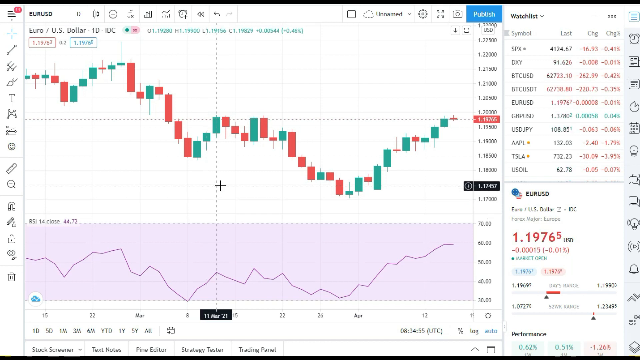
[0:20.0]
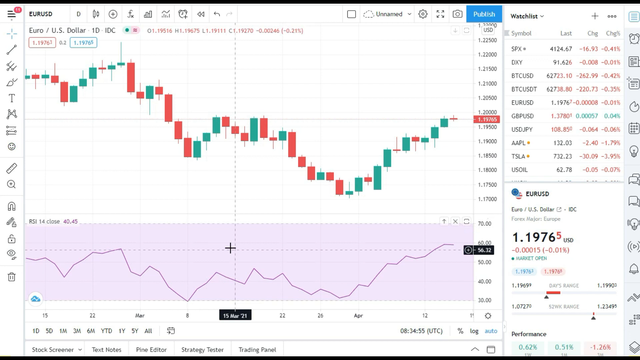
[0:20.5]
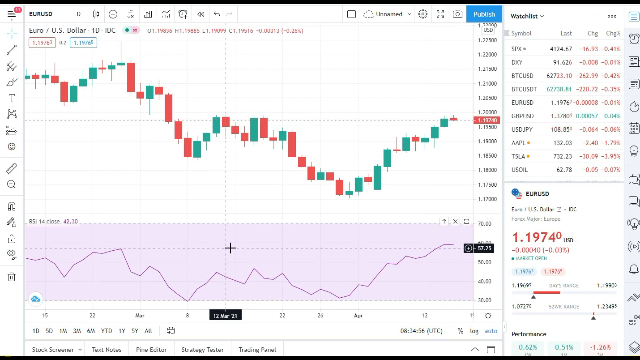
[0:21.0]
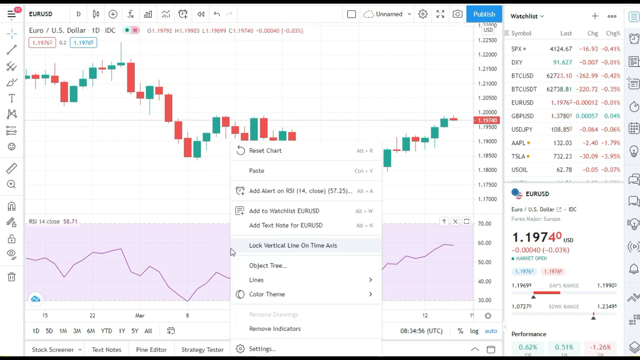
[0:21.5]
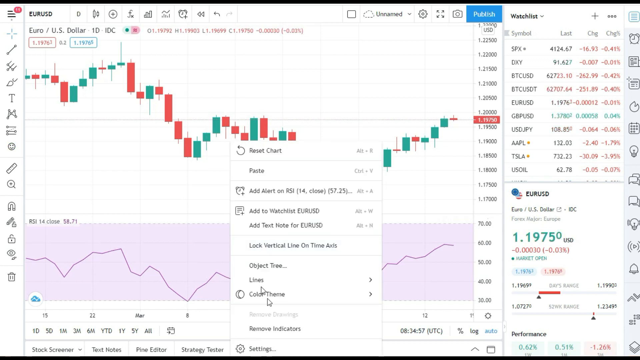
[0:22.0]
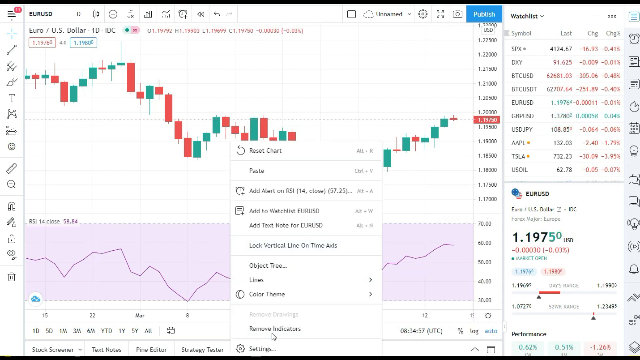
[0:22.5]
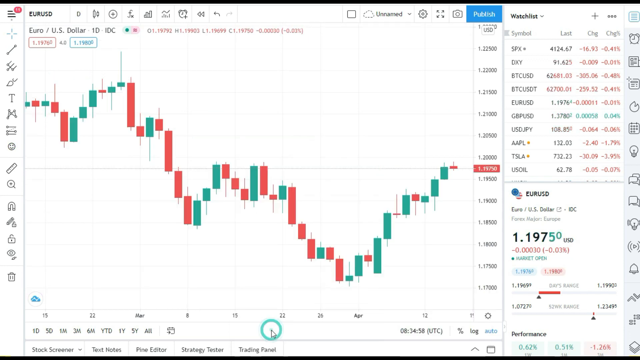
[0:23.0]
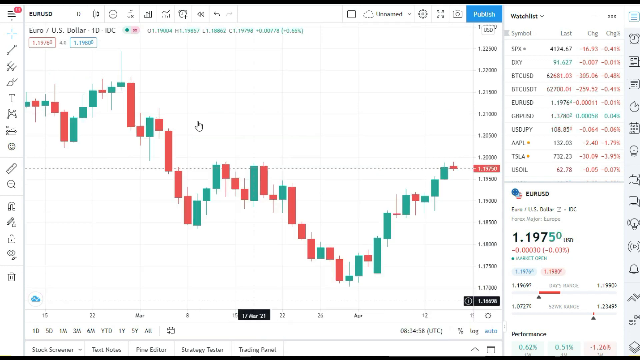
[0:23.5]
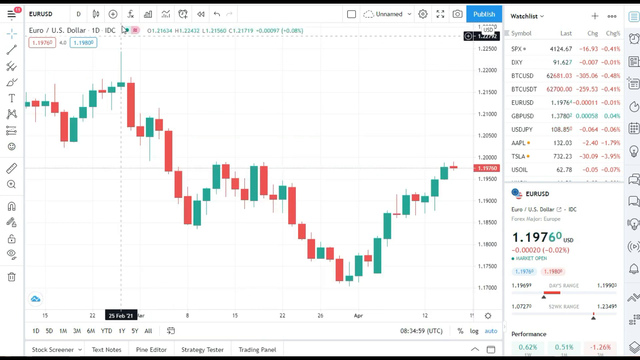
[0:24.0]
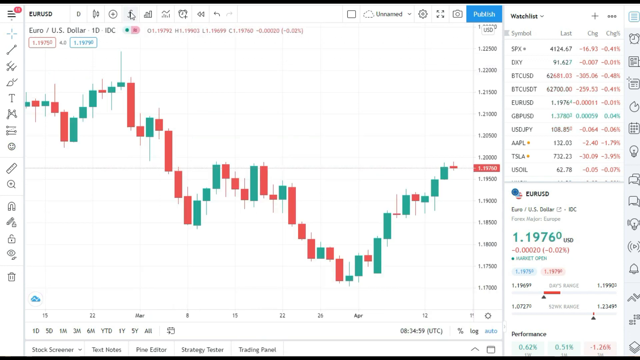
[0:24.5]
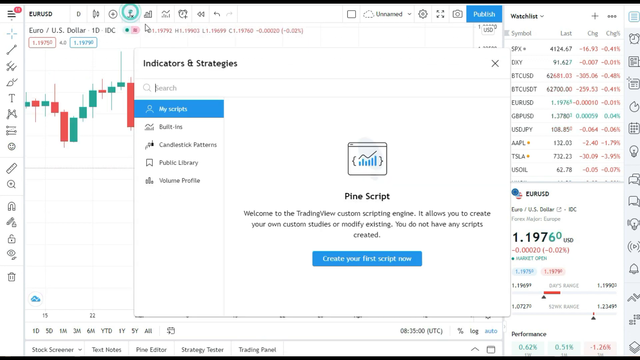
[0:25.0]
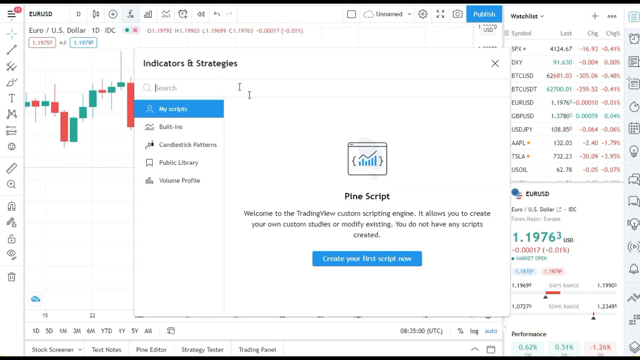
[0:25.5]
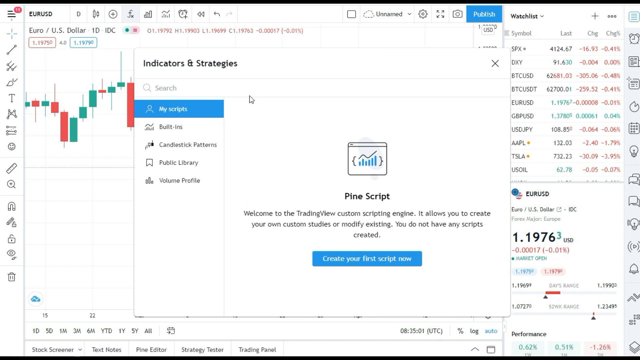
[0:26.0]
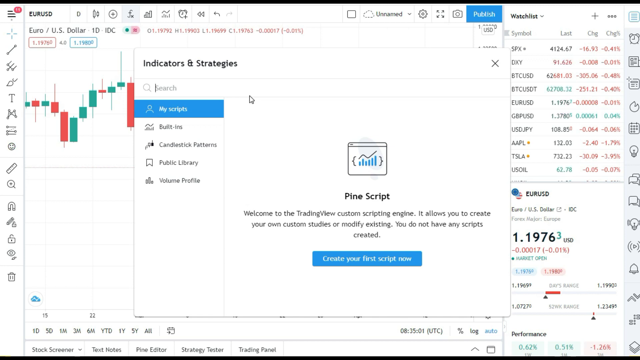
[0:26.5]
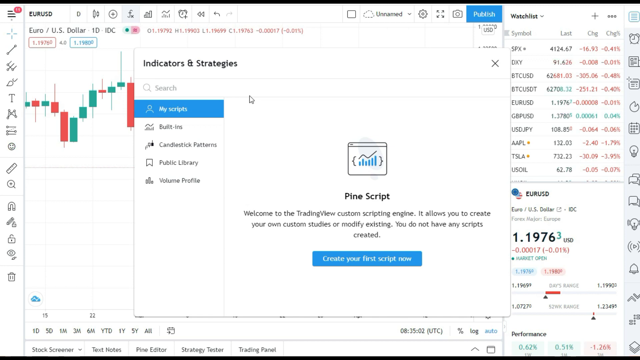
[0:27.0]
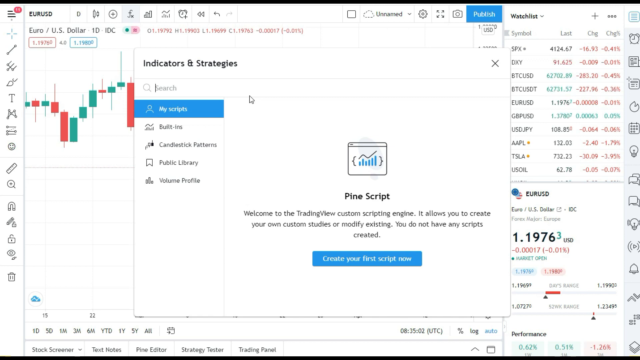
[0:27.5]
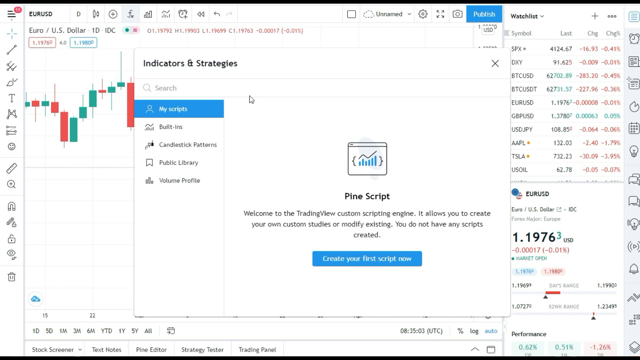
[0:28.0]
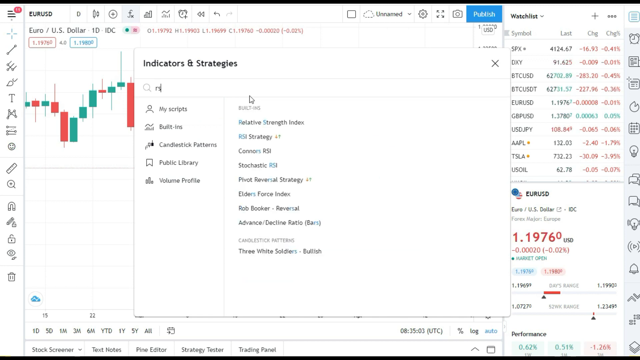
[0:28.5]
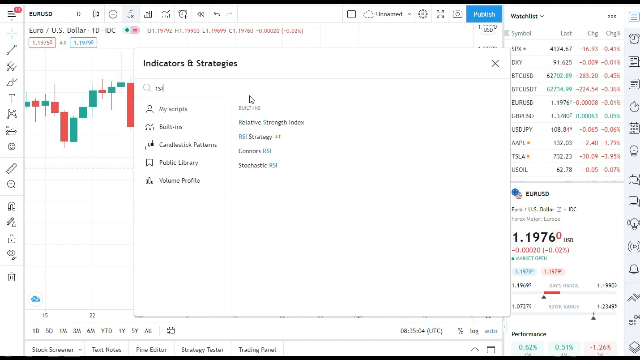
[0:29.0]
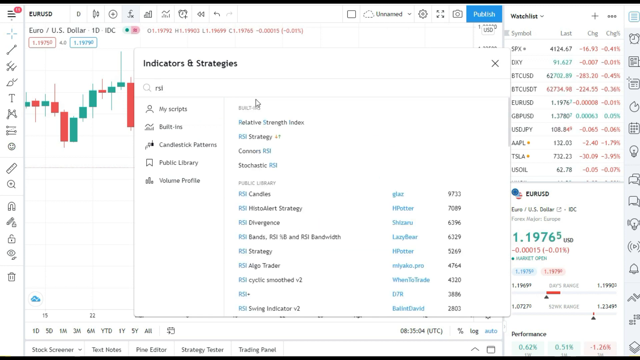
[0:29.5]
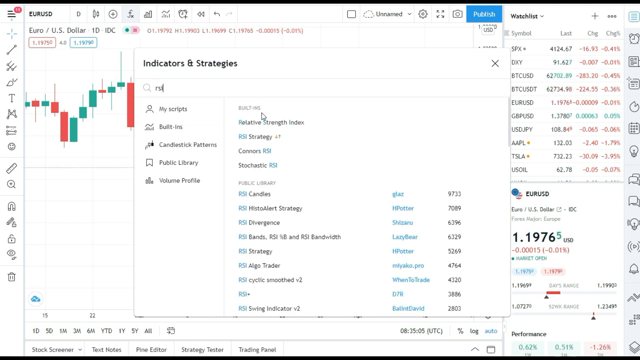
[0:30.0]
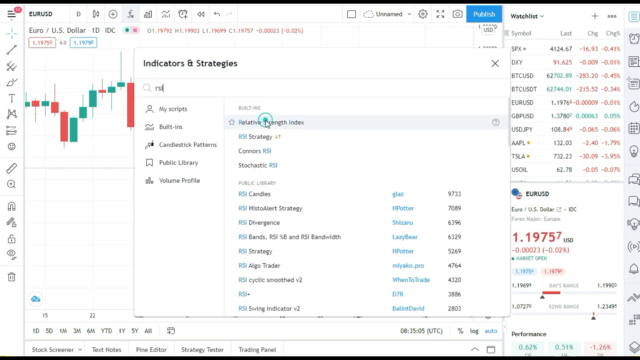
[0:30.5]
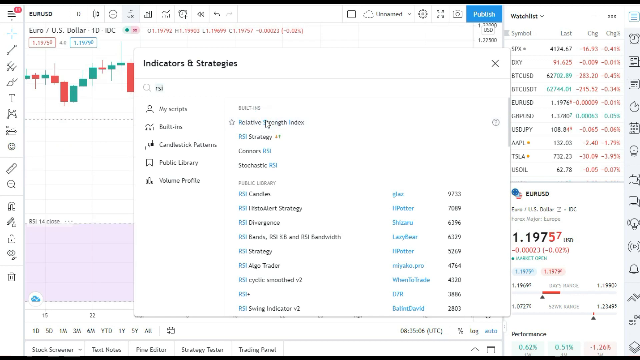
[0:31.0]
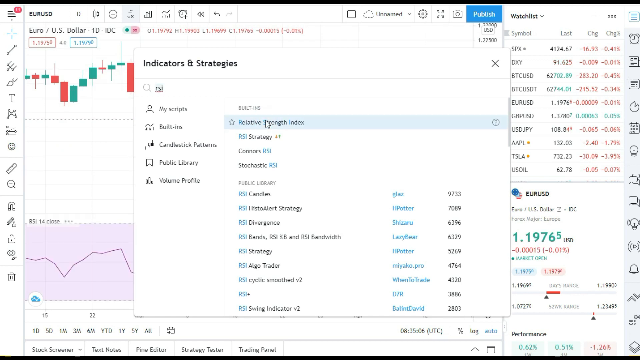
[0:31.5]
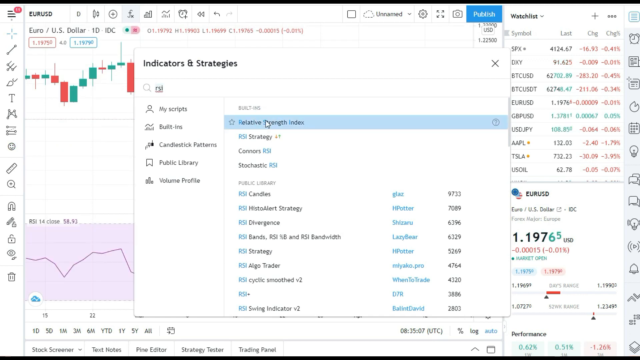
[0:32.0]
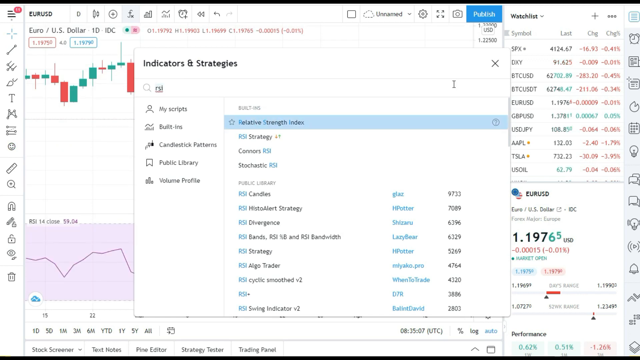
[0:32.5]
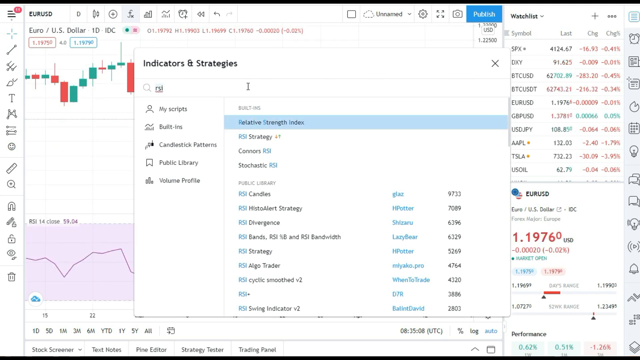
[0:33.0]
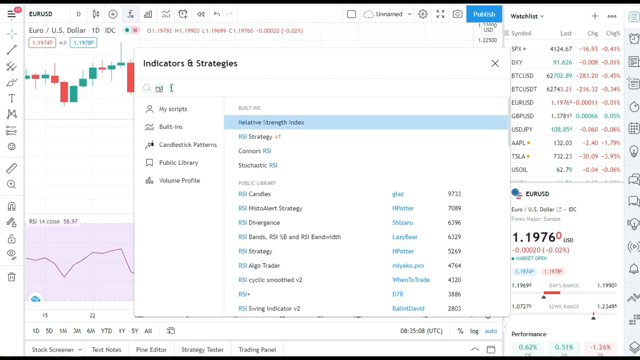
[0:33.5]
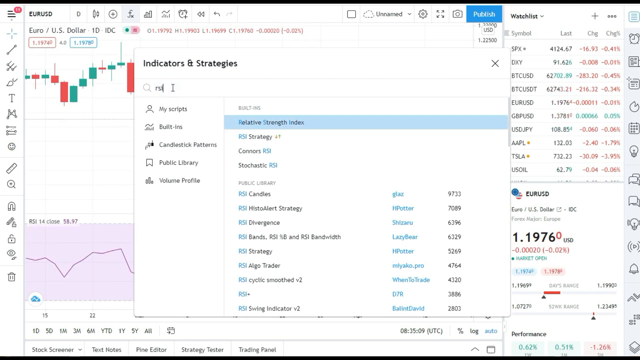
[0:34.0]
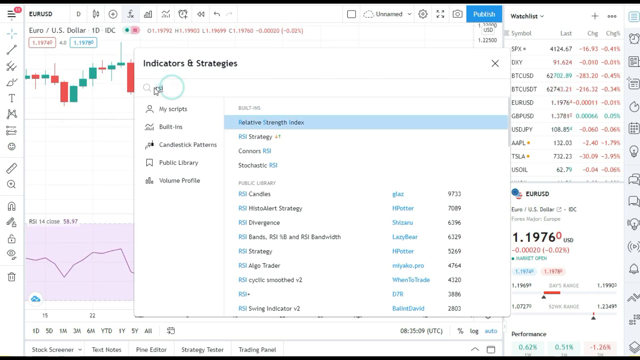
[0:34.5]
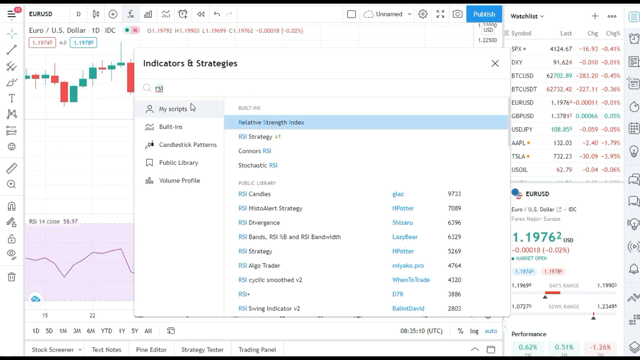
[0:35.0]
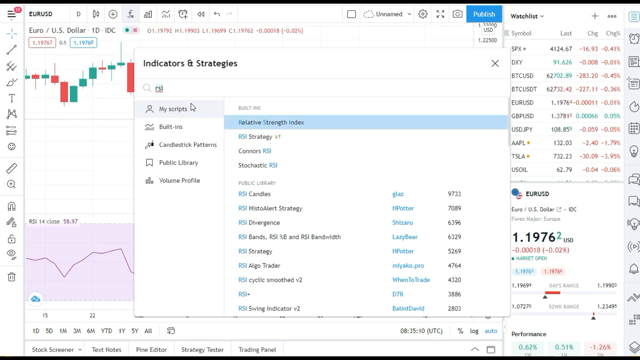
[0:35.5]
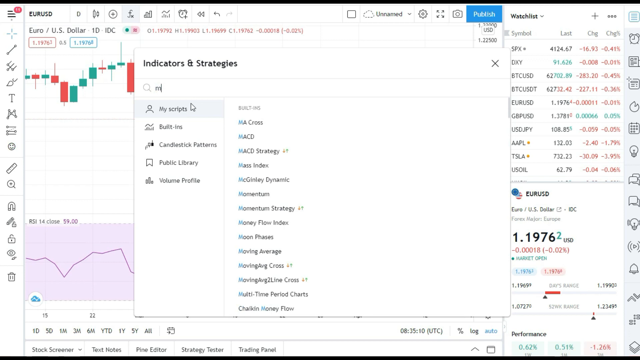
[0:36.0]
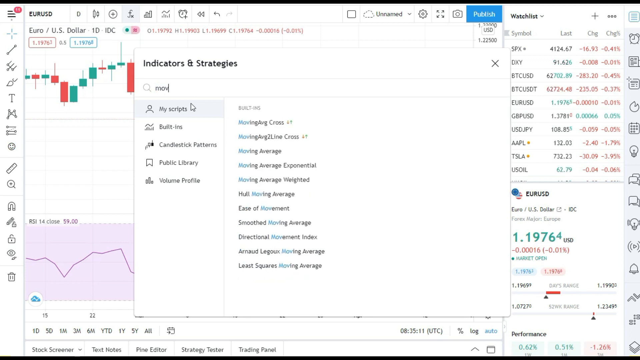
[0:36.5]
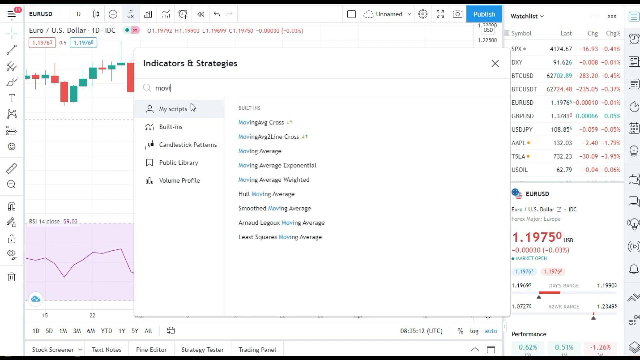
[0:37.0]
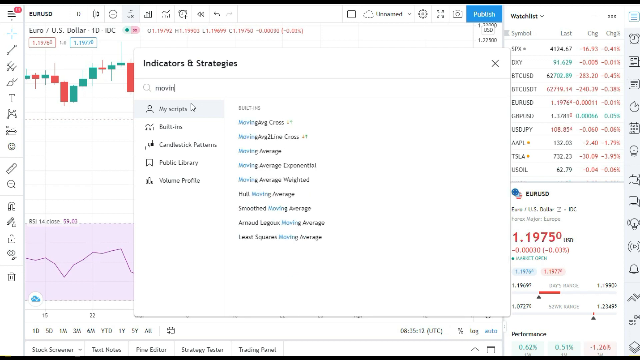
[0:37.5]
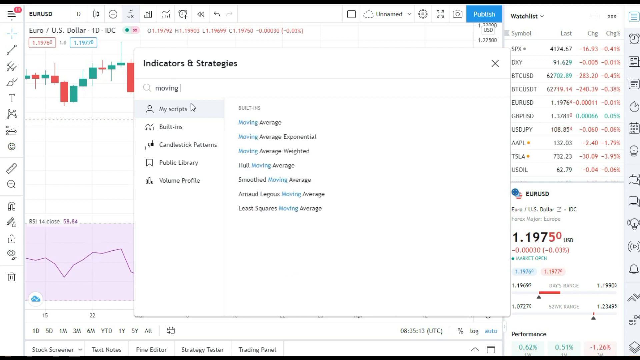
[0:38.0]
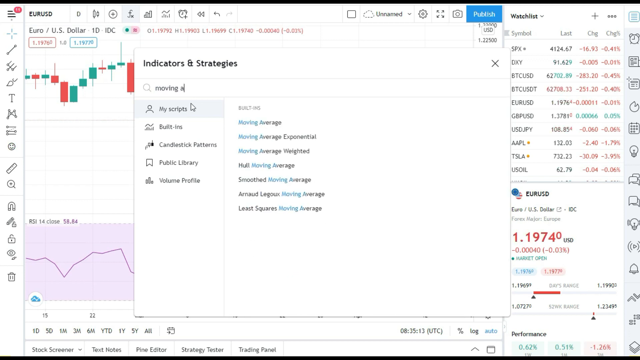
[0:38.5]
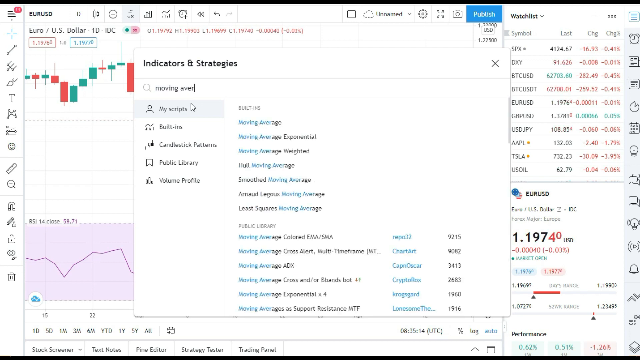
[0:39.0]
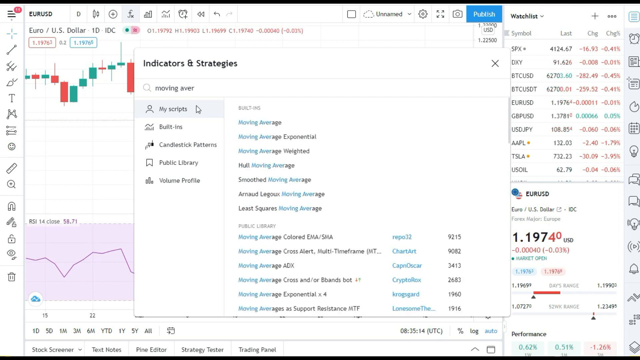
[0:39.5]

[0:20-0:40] The chart shows the euro trading against the US dollar, with the price fluctuating from 1.196.3 to 1.196.5 to 1.196.0. A relative strength index and a moving average are applied. A graph shows the rates fluctuating rather than staying at one position for long. The candlesticks are maroon and green; some are longer and others are thin. Other pairs are listed: BTC and USDT, euro against USD, Great British pound against the US dollar, US dollar against the Japanese yen, and the US against the oil price. The screen contains a lot of complicated items.